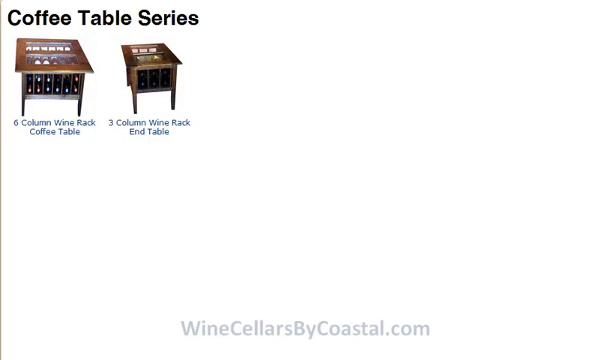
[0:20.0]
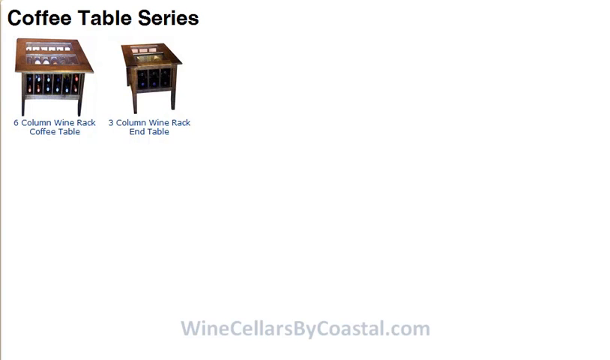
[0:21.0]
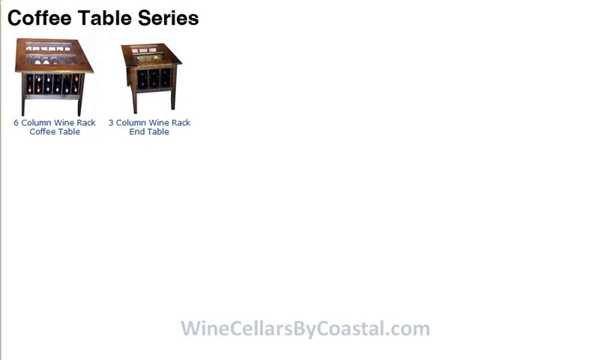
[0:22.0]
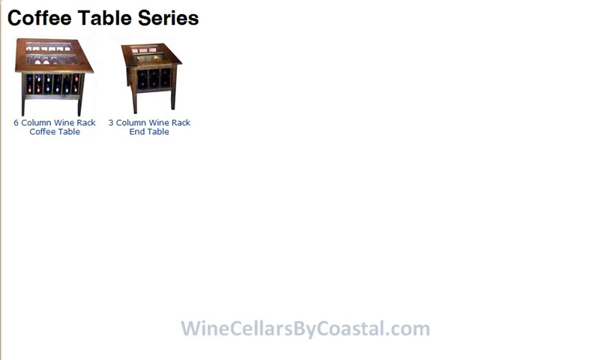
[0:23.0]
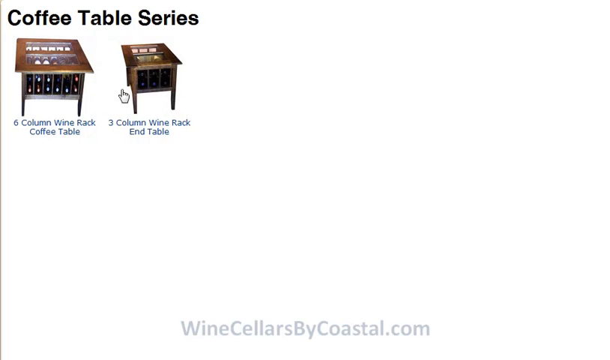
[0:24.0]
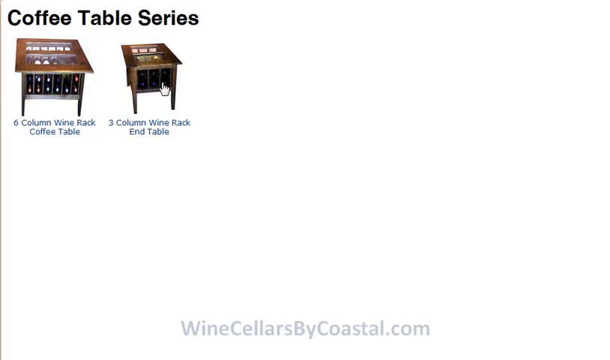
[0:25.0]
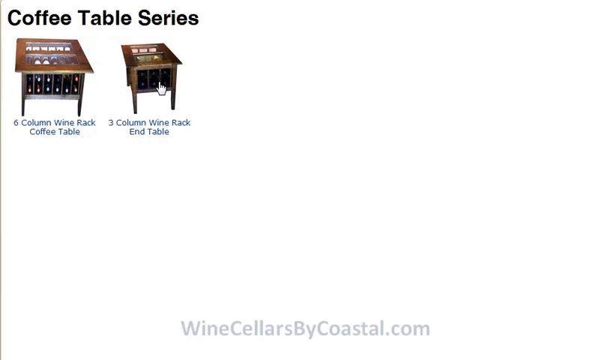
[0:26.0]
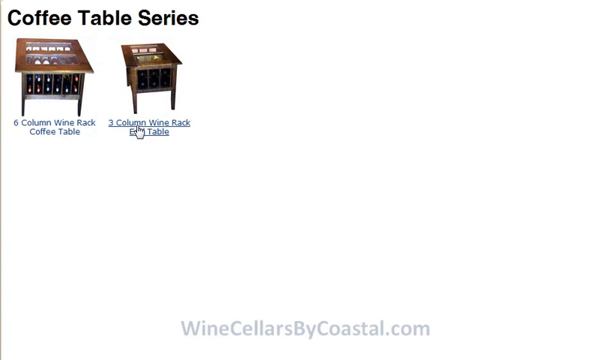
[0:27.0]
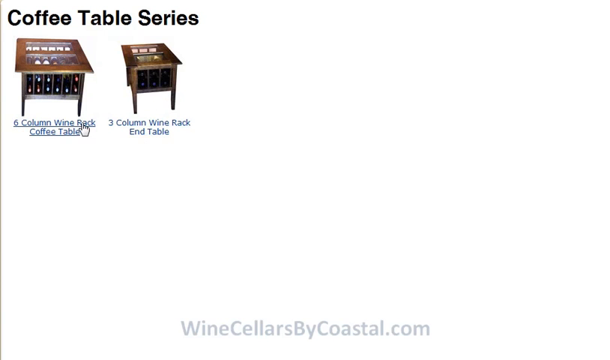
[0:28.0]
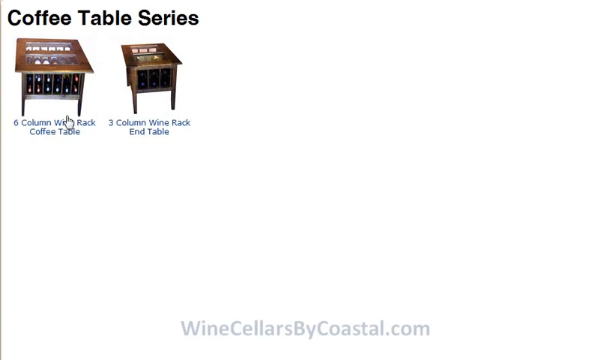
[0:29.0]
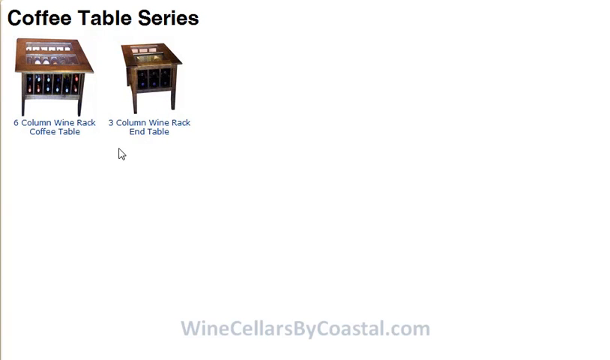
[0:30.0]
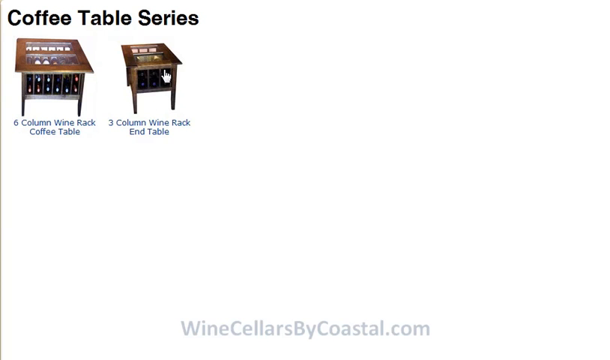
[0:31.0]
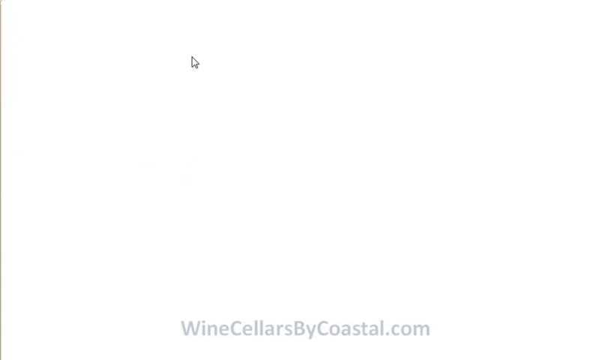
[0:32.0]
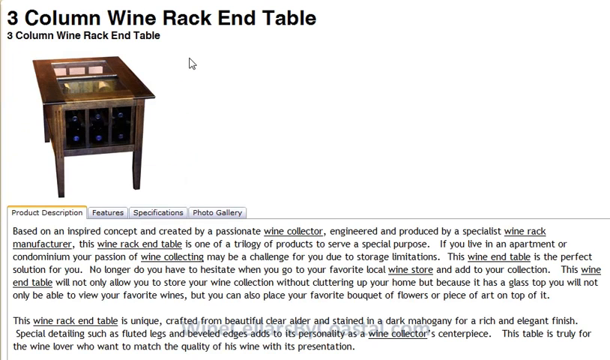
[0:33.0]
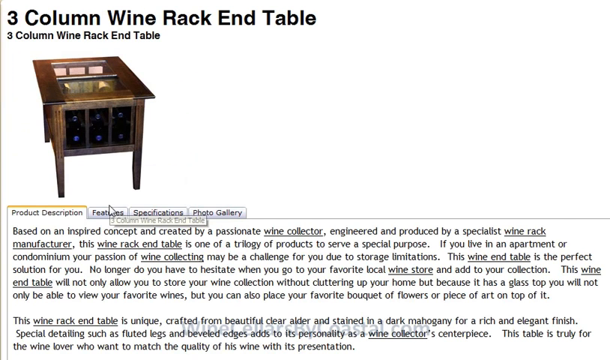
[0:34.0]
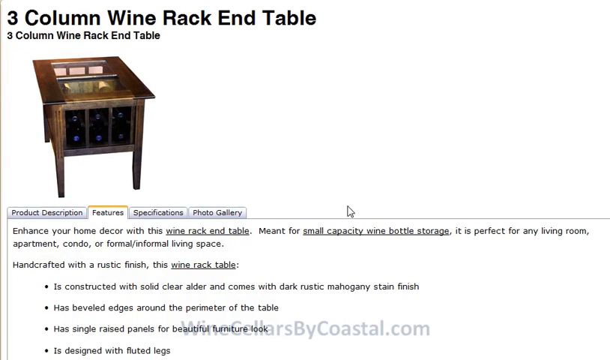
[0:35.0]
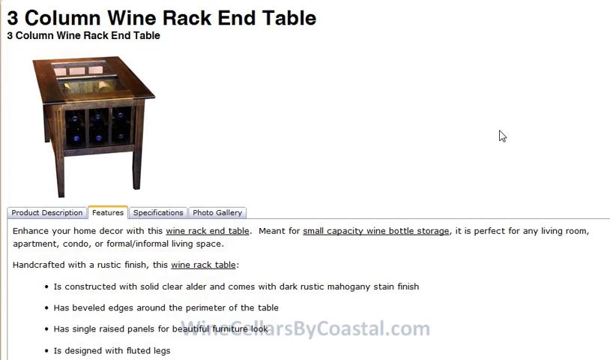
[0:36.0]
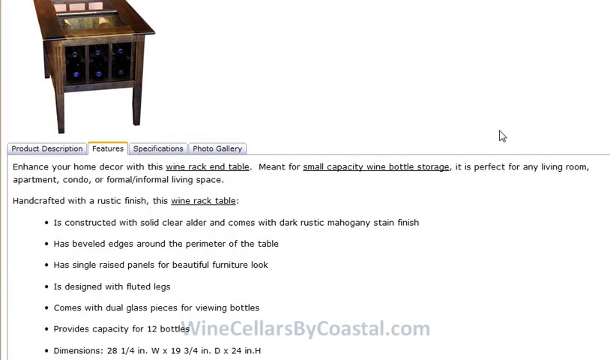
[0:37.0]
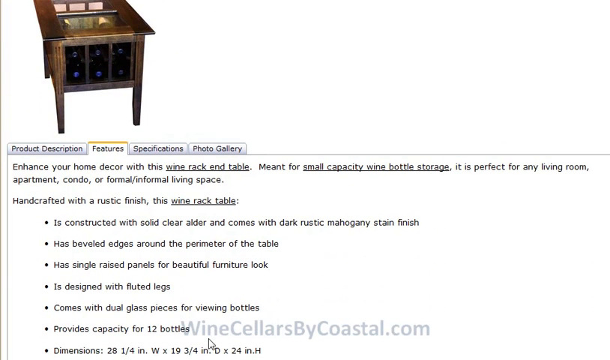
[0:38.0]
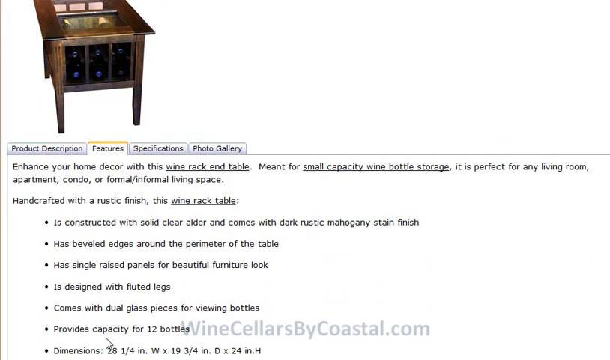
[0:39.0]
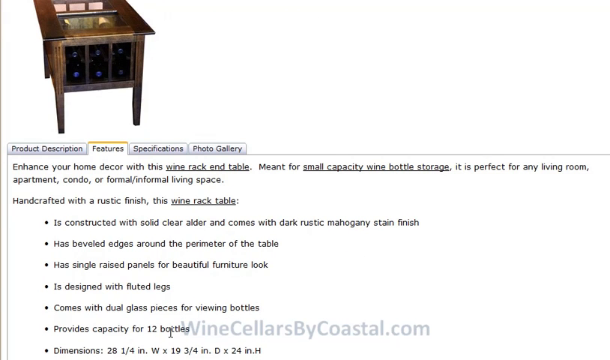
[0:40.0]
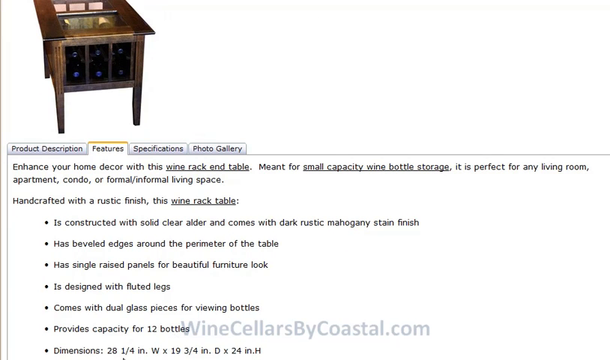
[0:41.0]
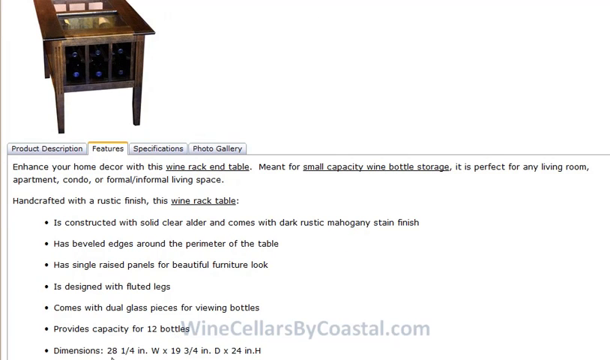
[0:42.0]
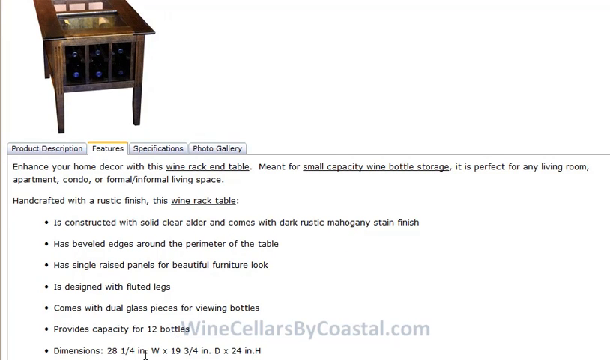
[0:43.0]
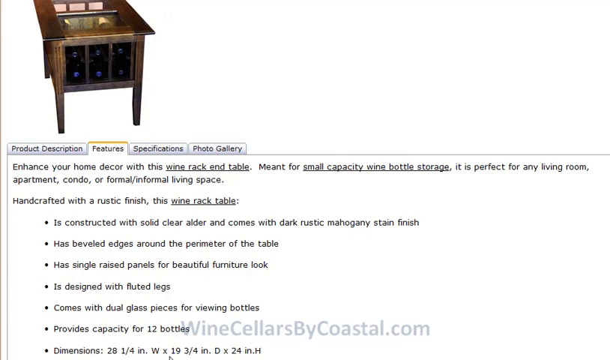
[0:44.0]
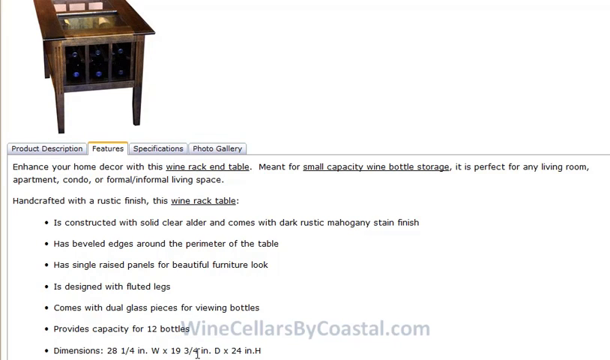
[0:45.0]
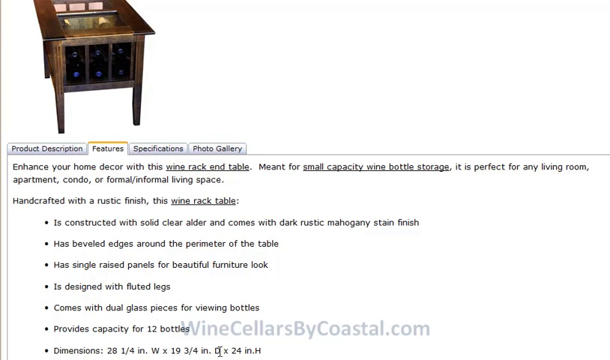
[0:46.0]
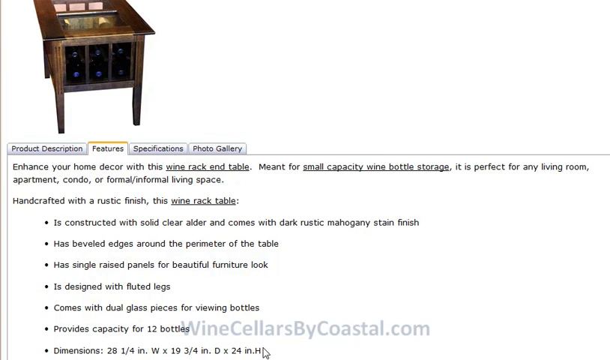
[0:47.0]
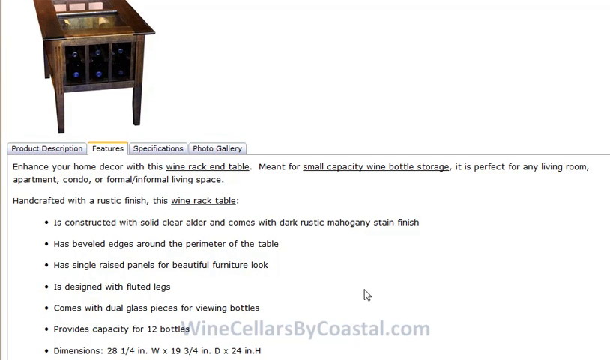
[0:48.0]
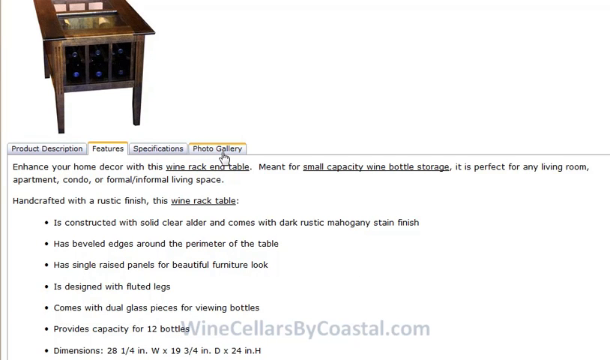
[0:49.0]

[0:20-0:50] A web page with a completely white background shows a black heading in the top left corner reading "Coffee Table Series". Underneath are two coffee tables, each with its product name below the image. The first is a large dark brown wood coffee table with two glass panels on top and a six-column wine rack underneath, named "Six Column Wine Rack Coffee Table". To its right is what looks like a similar but smaller coffee table with only a three column wine rack, named "Three Column Wine Rack End Table". The user's cursor hovers over each product before clicking the three-column wine rack end table. This opens another white page with "three-column wine rack end table" in black text in the top left corner and, underneath in smaller black text, "three-column wine rack end table" again. Below is a picture of the smaller coffee table with three columns for the wine rack and cutout panels on top covered with glass. Toward the bottom of the screen are four tabs: product description, features, specifications, and photo gallery. The cursor clicks the features tab, which shows a few sentences and a bulleted list describing the features and design of the table. The cursor kind of hovers over the last bullet point, which gives the product dimensions "28 1/4 in. W x 19 3/4 in, D x 24 in, H". The cursor then clicks the photo gallery tab, which shows a larger version of the same image of the smaller coffee table.